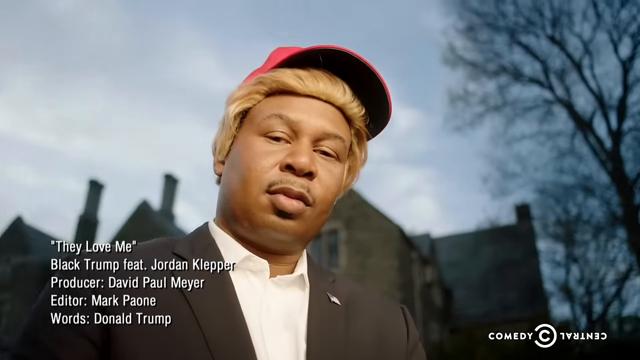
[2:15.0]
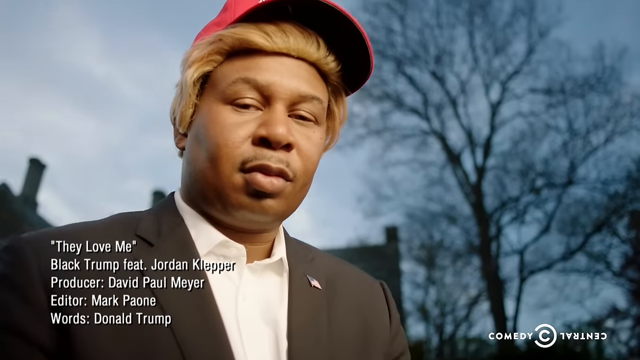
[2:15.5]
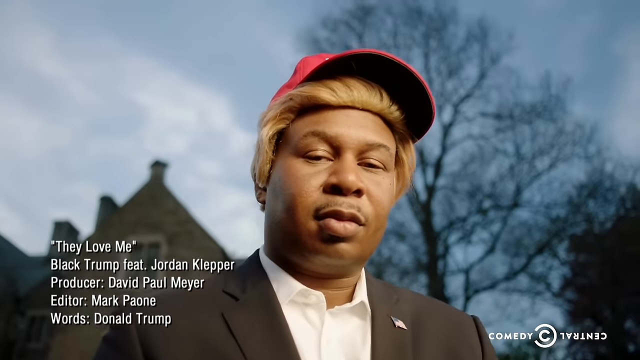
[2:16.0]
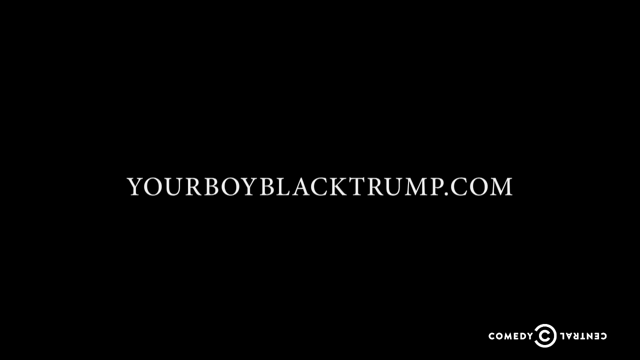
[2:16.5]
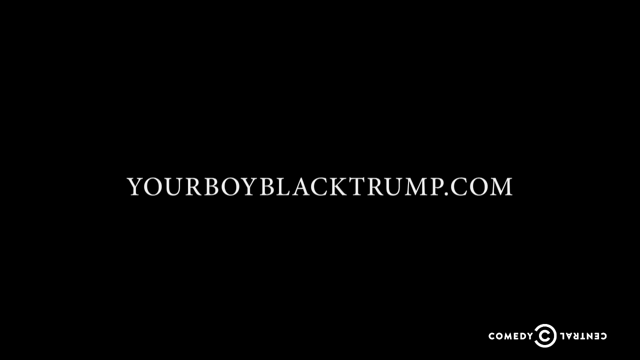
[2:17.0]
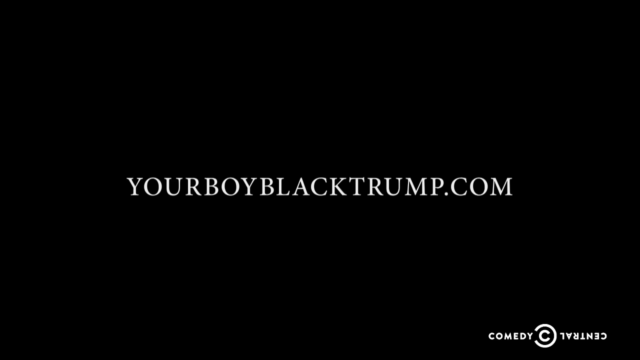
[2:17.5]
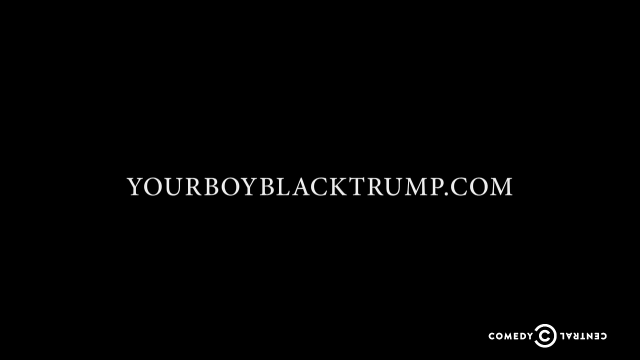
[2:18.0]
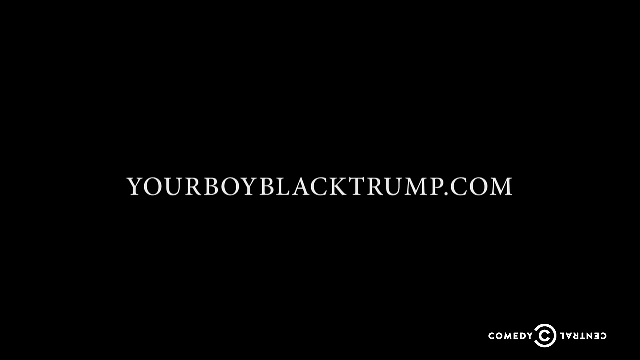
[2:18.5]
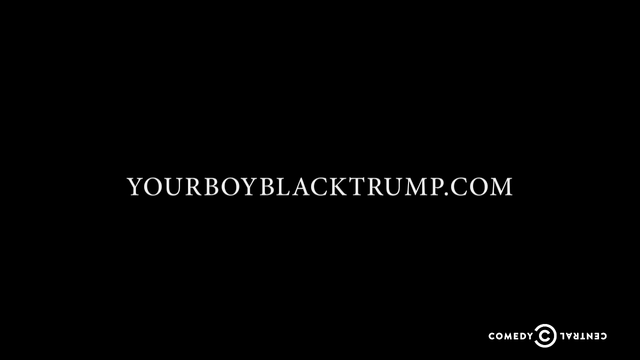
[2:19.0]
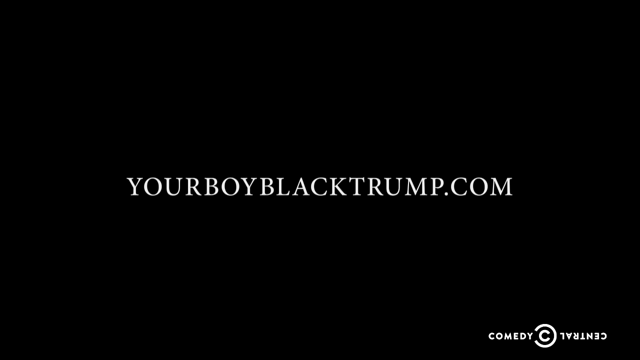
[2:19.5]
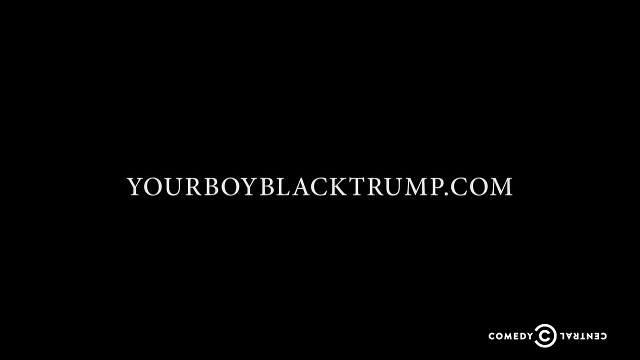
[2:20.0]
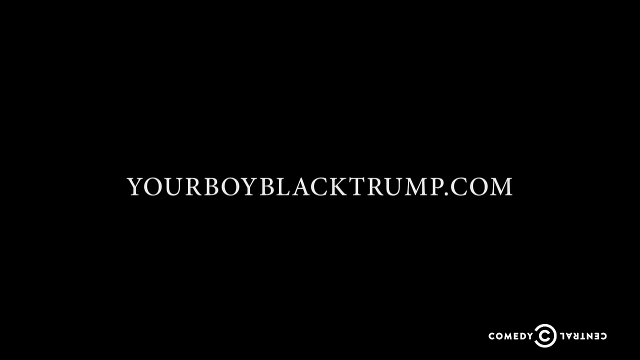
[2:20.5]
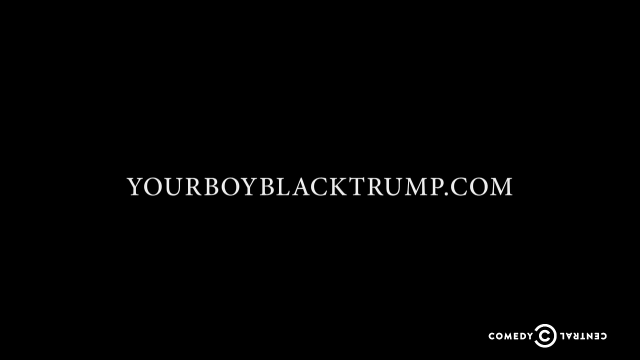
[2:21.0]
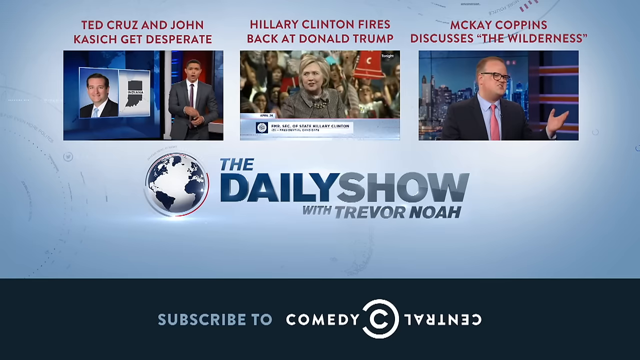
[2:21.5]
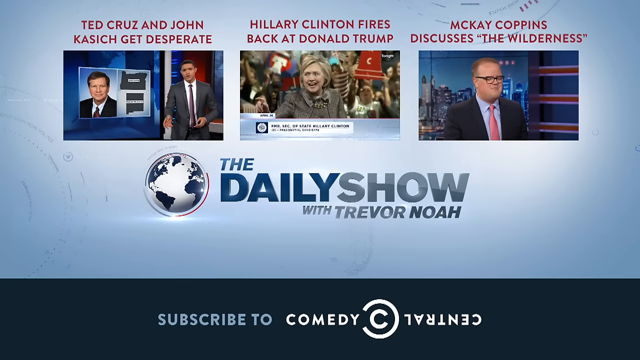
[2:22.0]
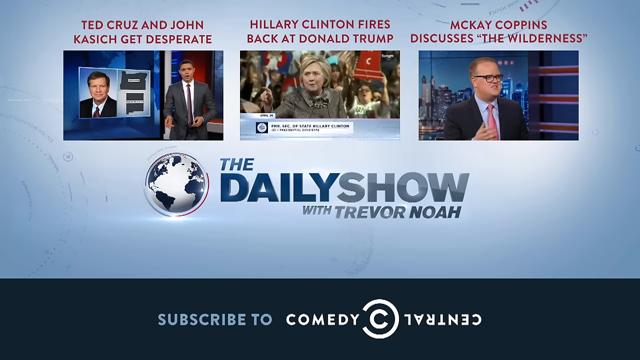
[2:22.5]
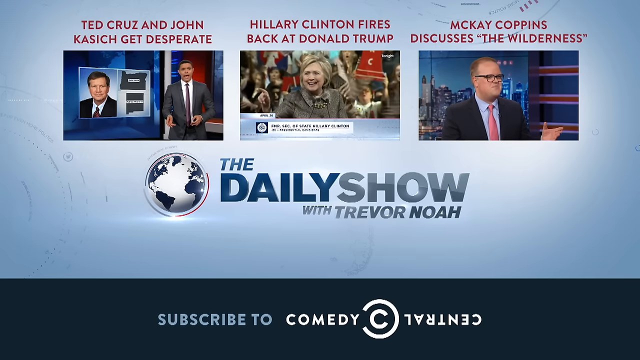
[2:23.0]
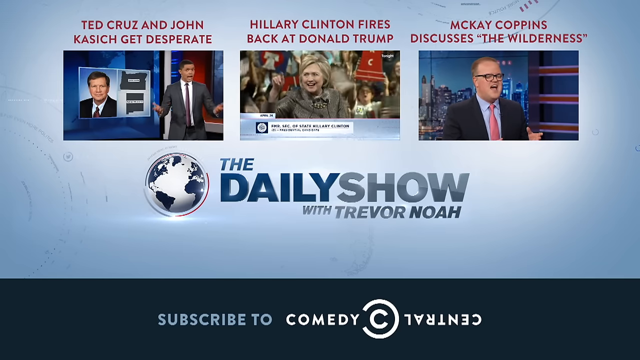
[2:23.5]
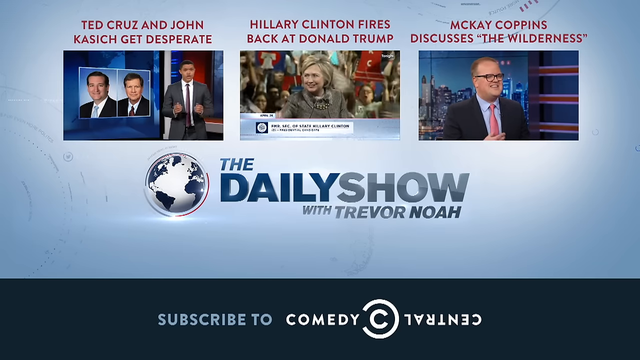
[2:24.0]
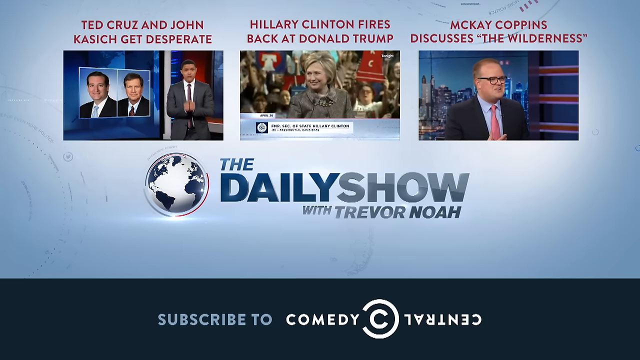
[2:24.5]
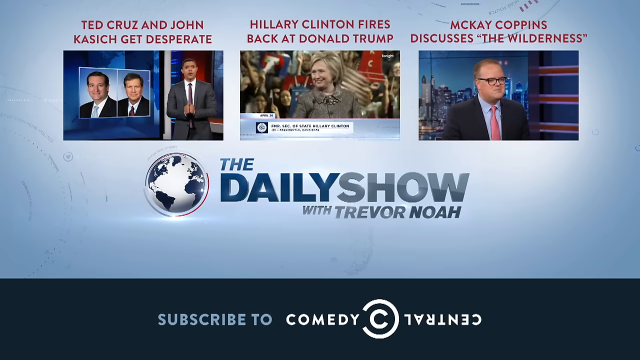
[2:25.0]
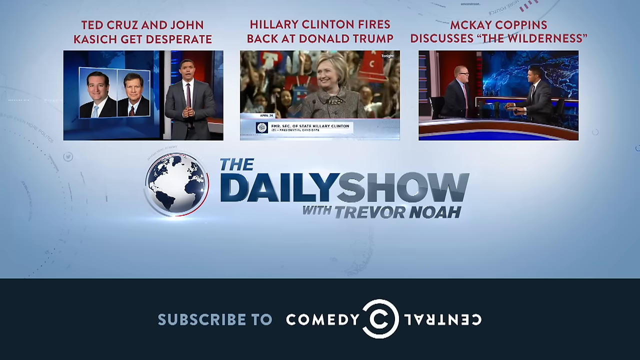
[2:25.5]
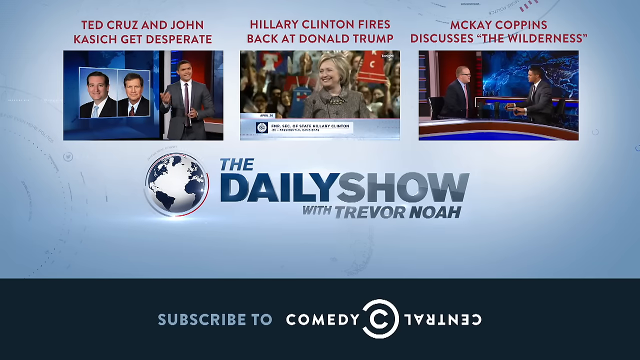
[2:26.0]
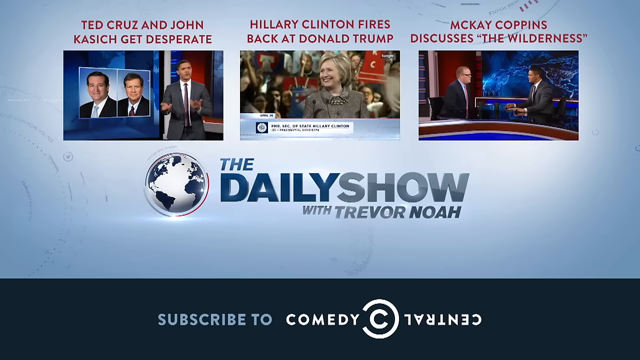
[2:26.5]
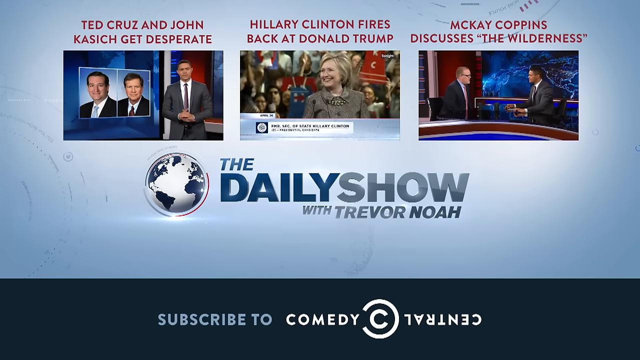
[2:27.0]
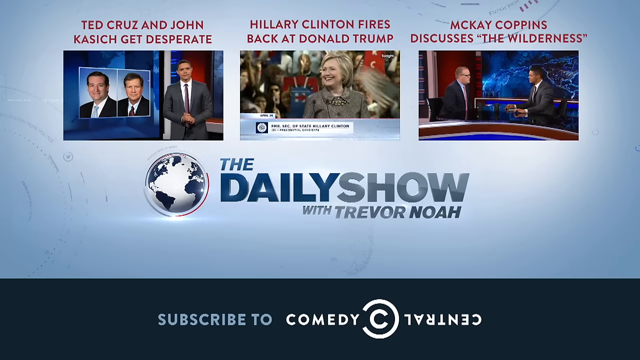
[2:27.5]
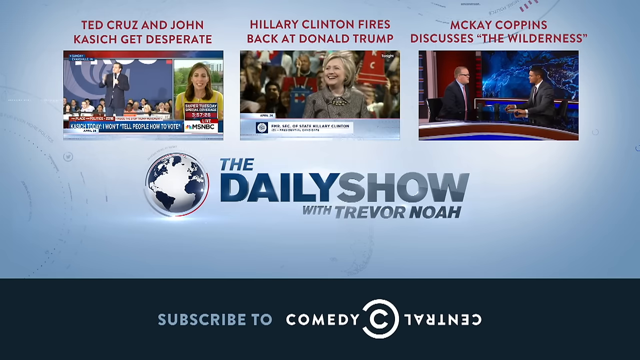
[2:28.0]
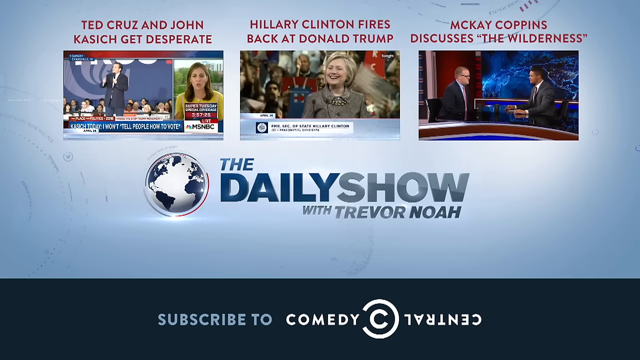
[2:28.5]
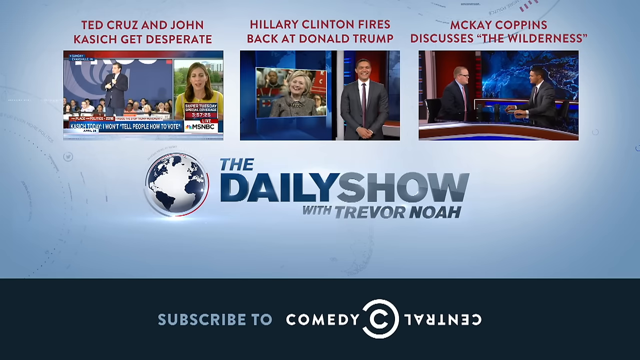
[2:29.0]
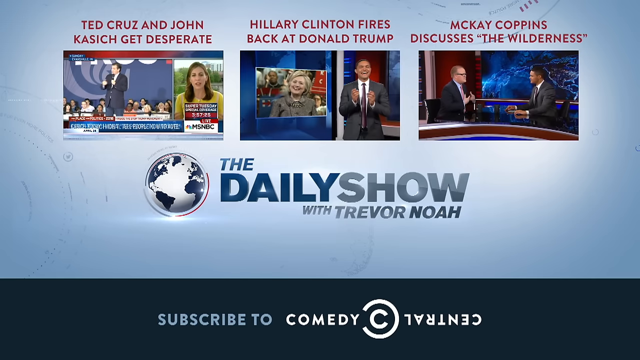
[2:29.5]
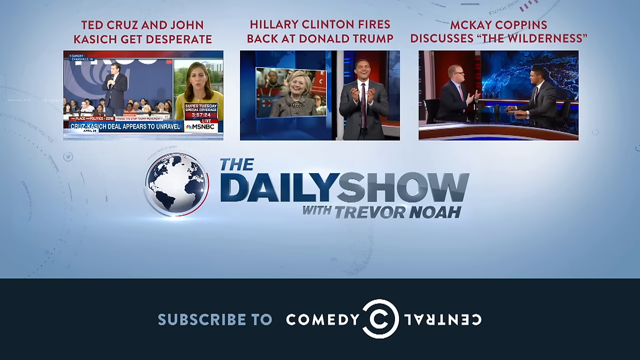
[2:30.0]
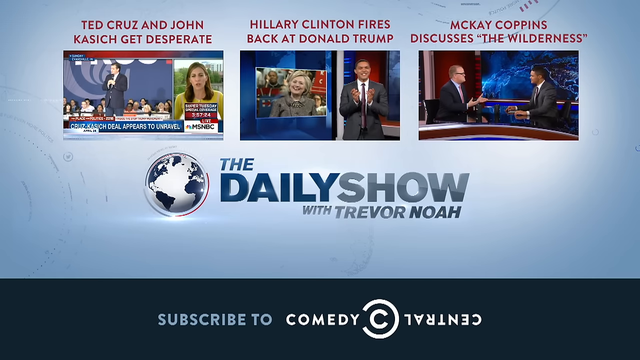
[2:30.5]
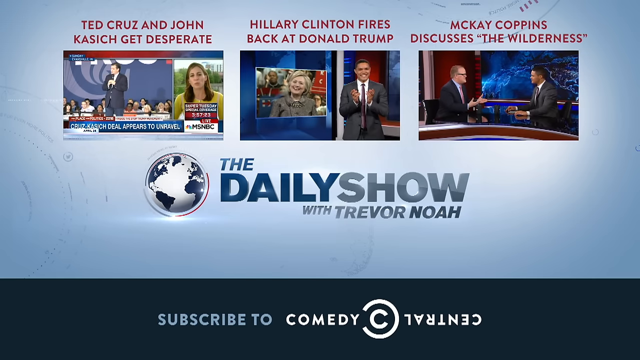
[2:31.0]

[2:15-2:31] Near the end, a title in white reads "They Love Me," followed by credits presenting the artist, Black Donald Trump, featuring Jordan Klepper, producer David Paul Meyer, Mark Poe Wong, and words, Donald Trump. Donald Trump then stares into the center of the camera with what appears to be a smug face, wearing a black dress suit with a white collared button shirt. He appears to wear a golden hairpiece, along with the red hat reading "Make America Great Again." A black screen follows with white text reading "your boy black trump.com" and Comedy Central at the bottom right of the screen. At the end, several clips of the Daily Show with Trevor Noah are shown: one of Ted Cruz and John Casey, one titled "Hillary Clinton fires back," and a final one.